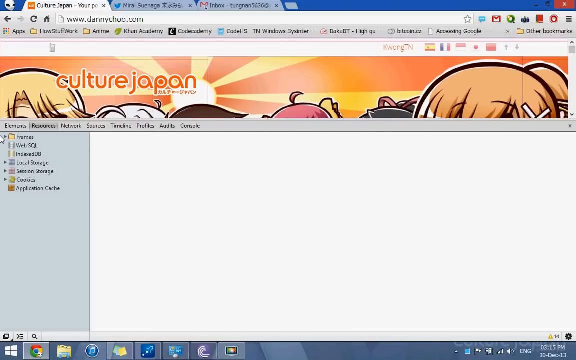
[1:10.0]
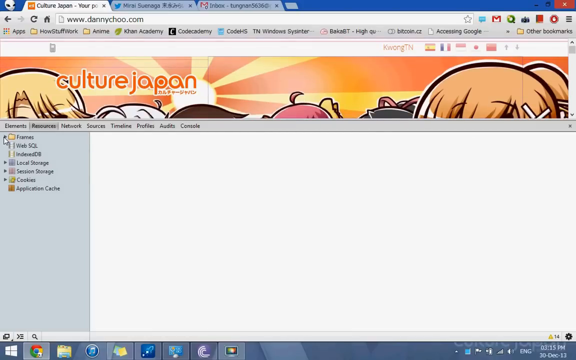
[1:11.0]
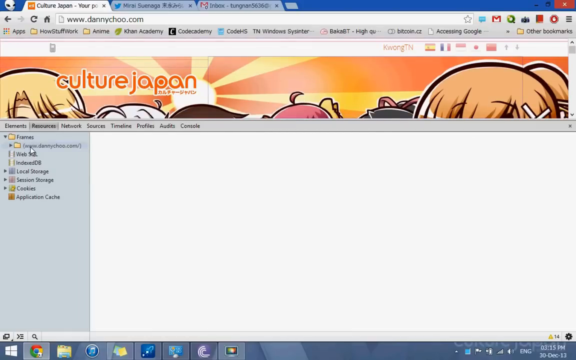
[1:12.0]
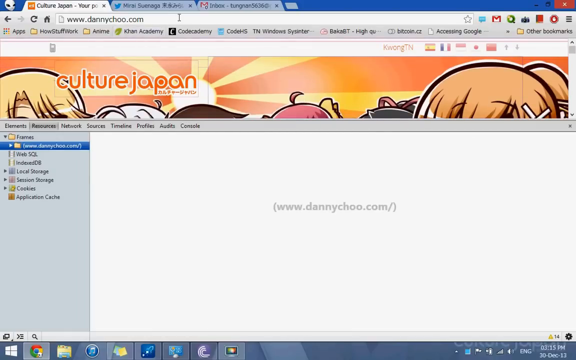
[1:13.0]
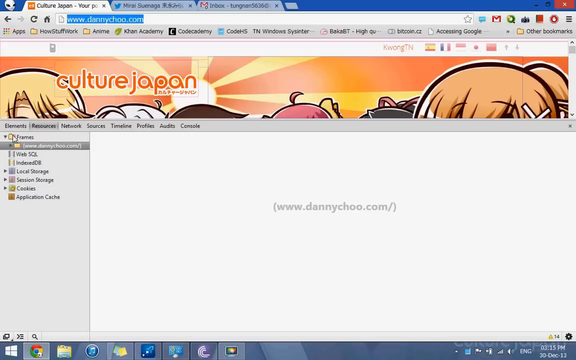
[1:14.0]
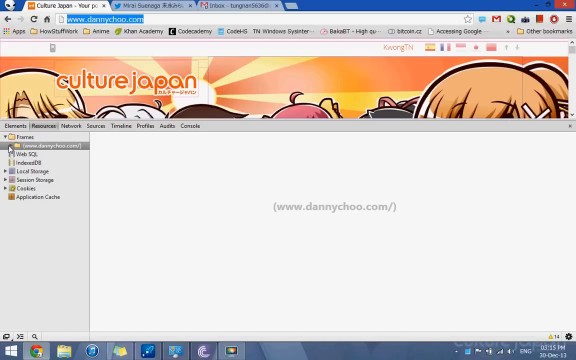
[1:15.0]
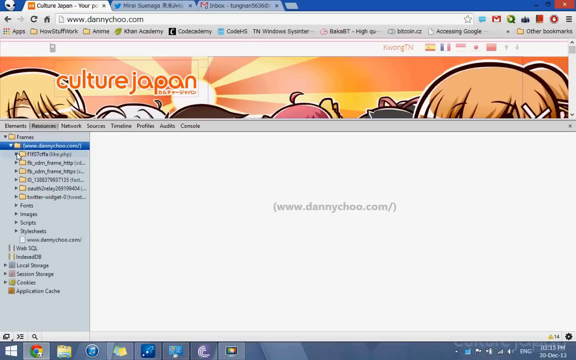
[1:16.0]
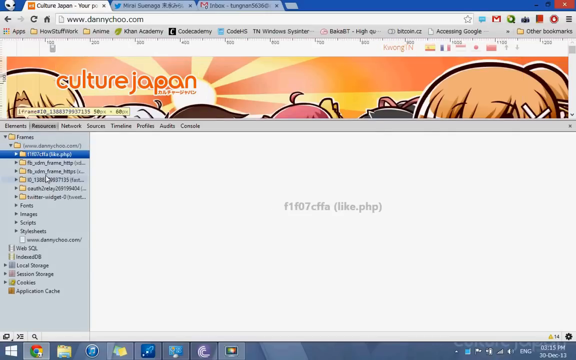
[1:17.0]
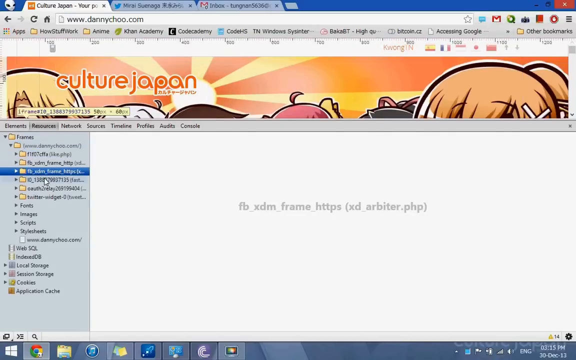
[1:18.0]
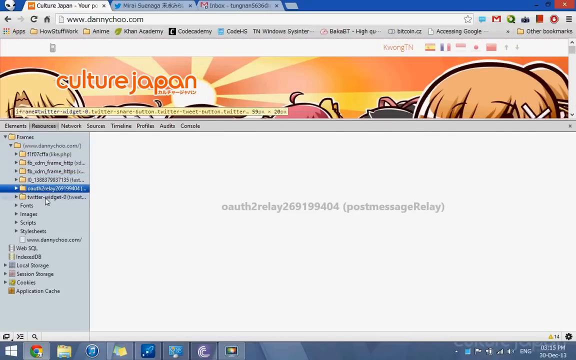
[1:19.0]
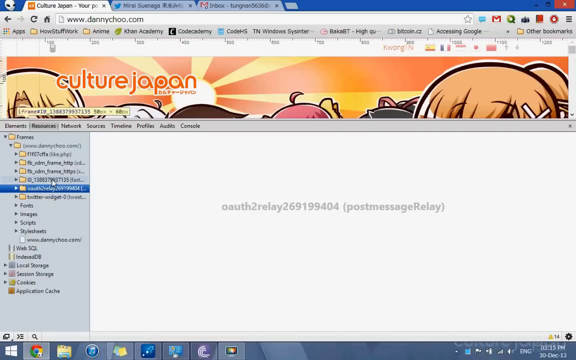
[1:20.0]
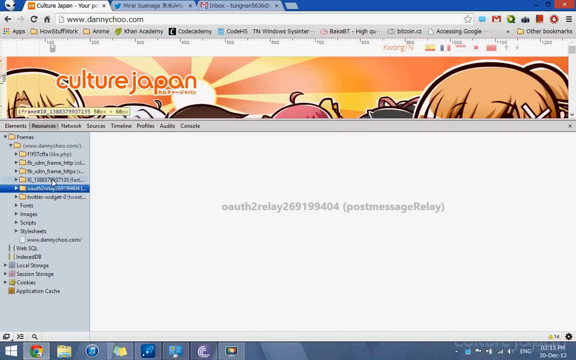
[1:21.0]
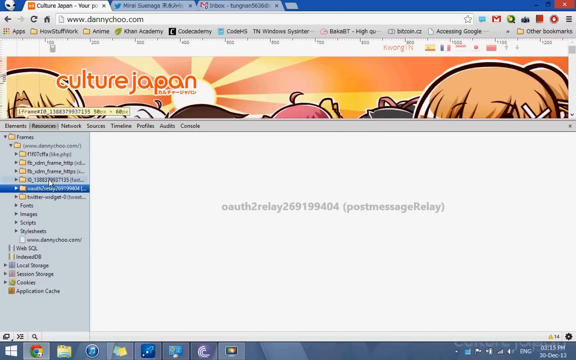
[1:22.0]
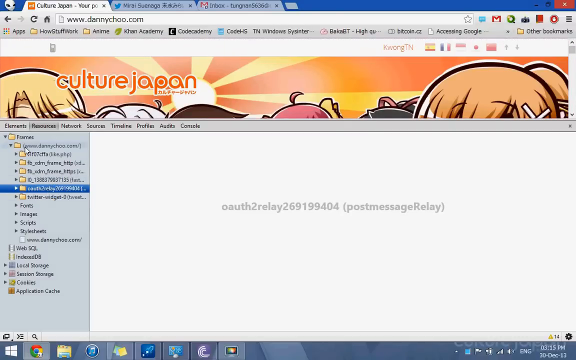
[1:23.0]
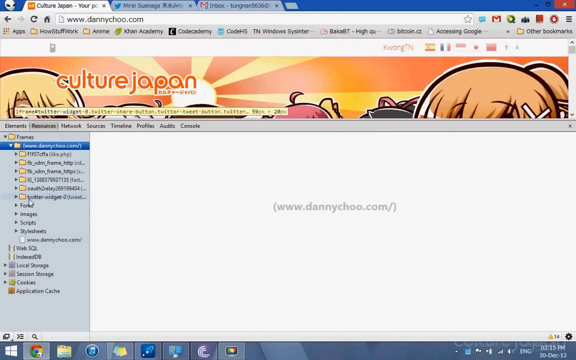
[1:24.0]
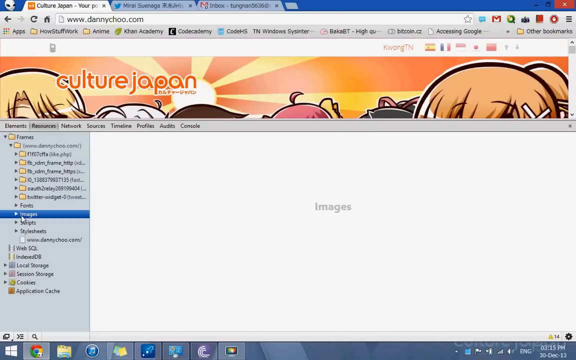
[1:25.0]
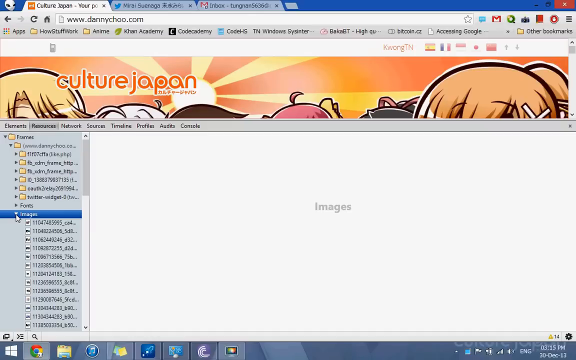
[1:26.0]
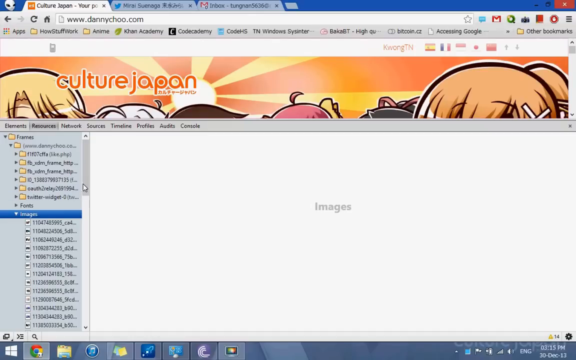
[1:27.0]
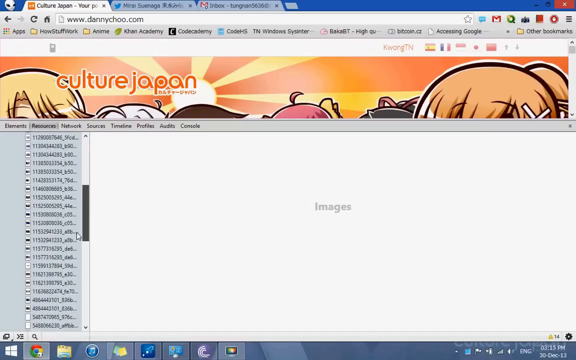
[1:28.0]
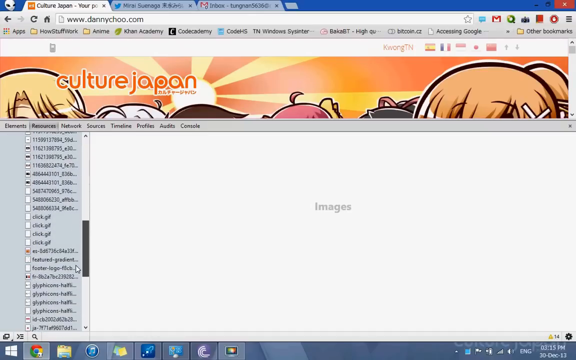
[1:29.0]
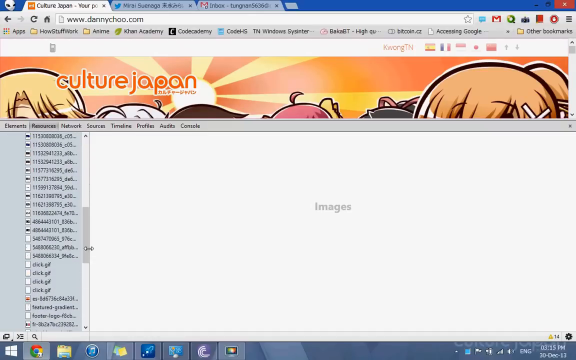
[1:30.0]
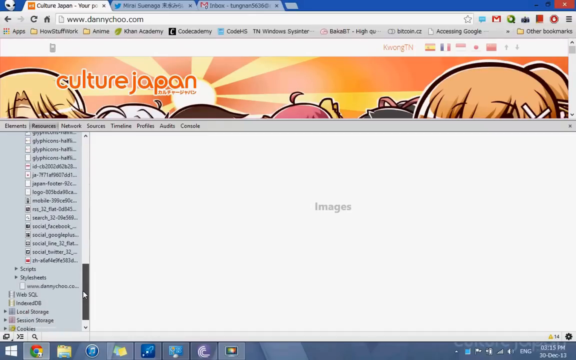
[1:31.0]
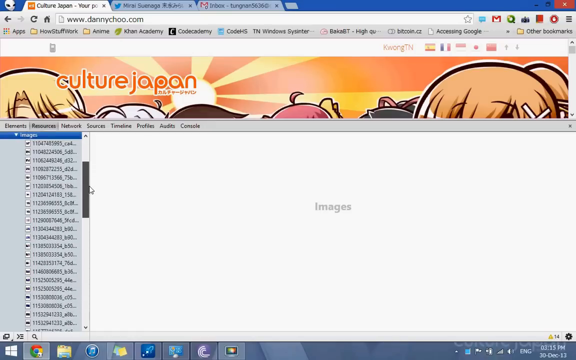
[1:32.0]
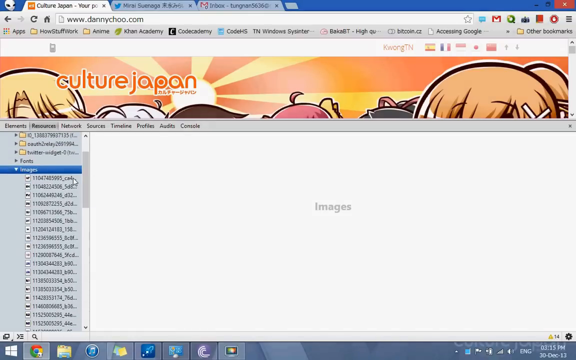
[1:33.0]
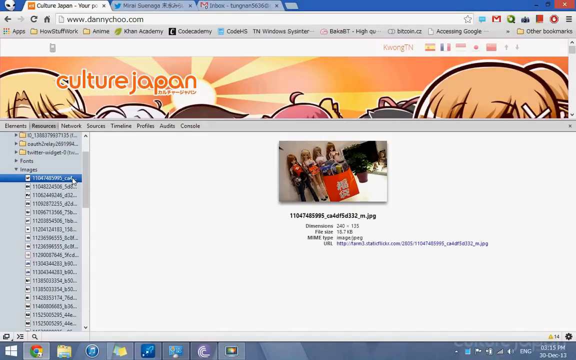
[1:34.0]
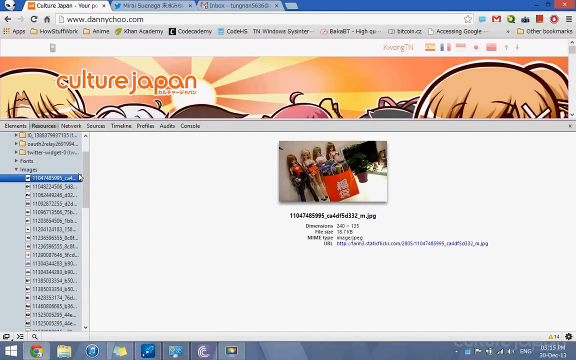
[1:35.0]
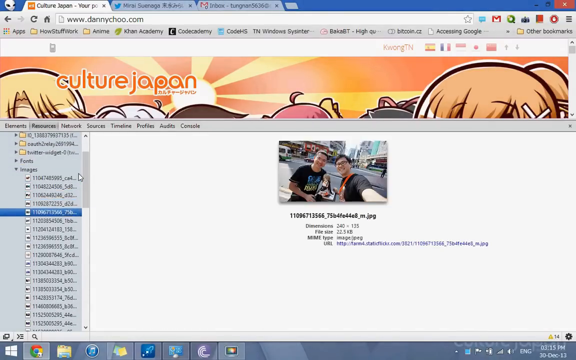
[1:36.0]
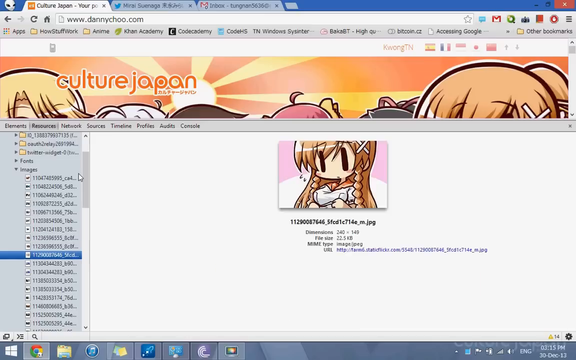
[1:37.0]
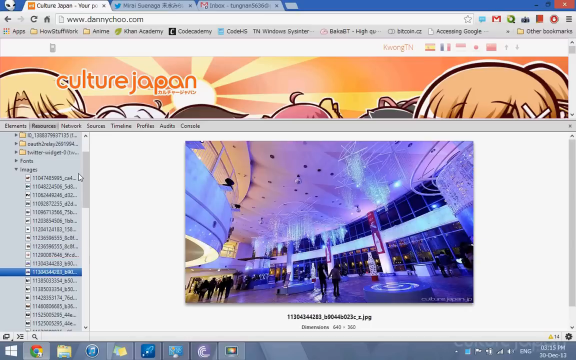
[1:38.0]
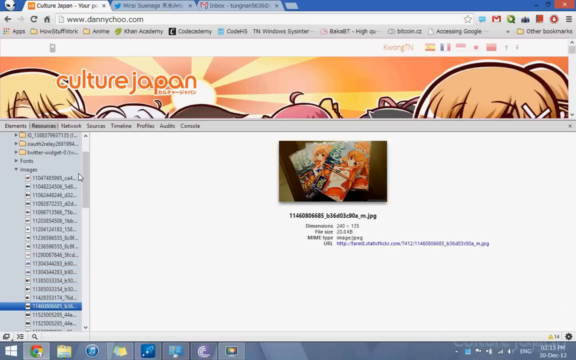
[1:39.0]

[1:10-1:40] The developer tools are in the frames section, which reads "frames www.dannychoo.com", and different folders beneath the frames are clicked through; the frames are labeled with sets of letters. Then the images tab on the right-hand side is clicked, revealing many images, which are scrolled through quickly with the scroll bar. The images are untitled and numbered, and they flash on the screen quickly; they are mostly photographs, including photos of dolls, some anime, an event space, a doll worker, and the KFC Kentucky Fried Chicken logo.